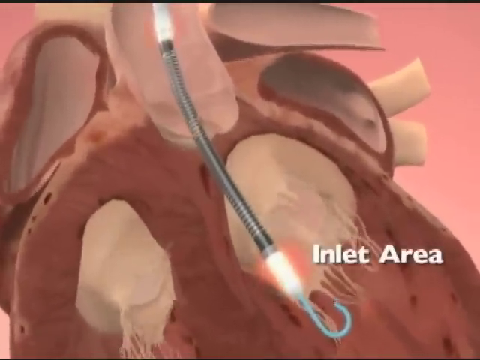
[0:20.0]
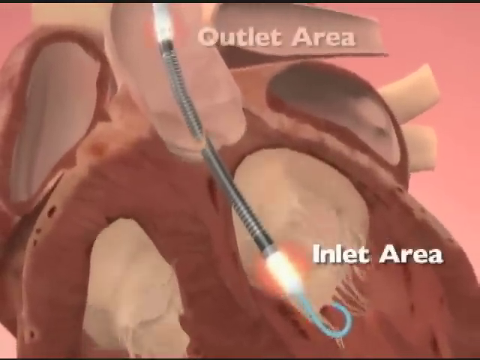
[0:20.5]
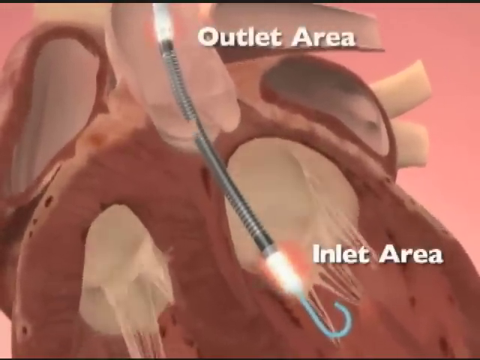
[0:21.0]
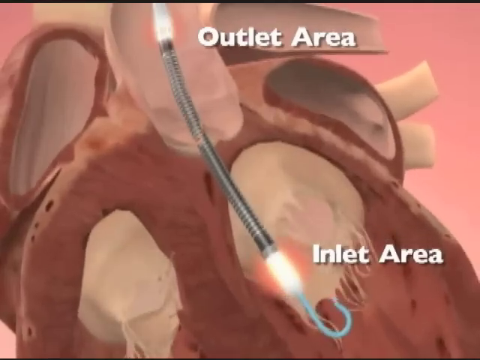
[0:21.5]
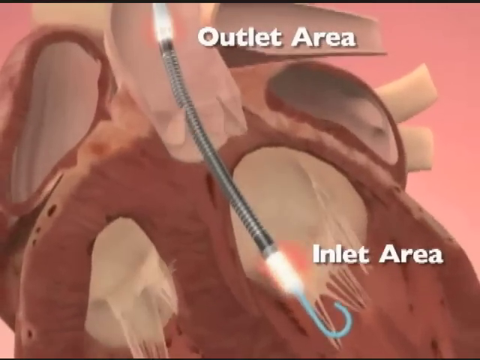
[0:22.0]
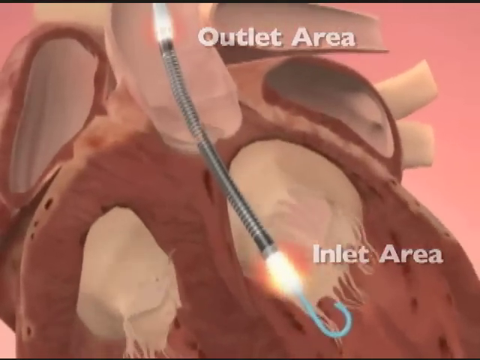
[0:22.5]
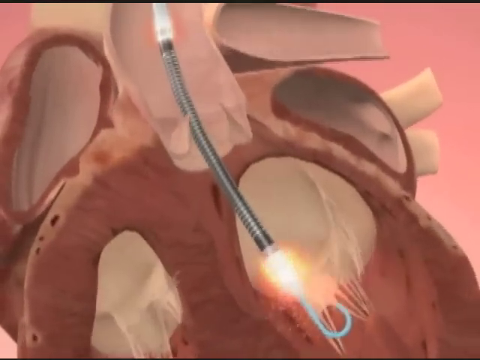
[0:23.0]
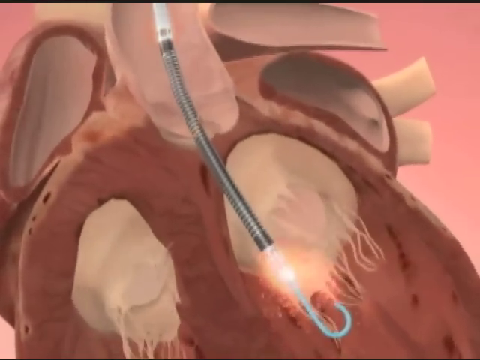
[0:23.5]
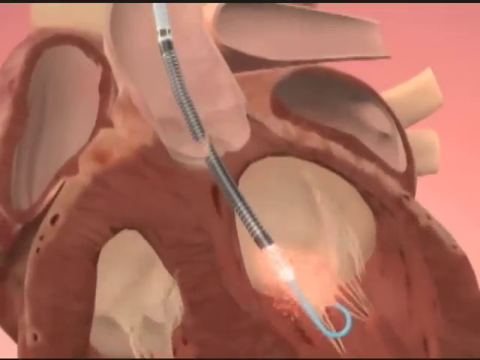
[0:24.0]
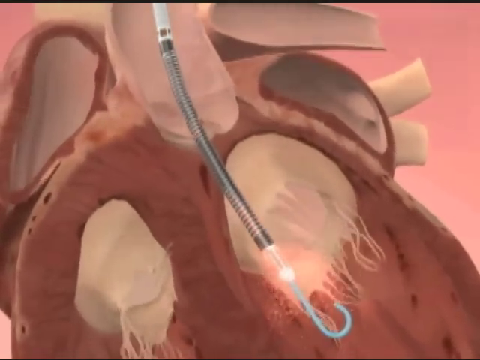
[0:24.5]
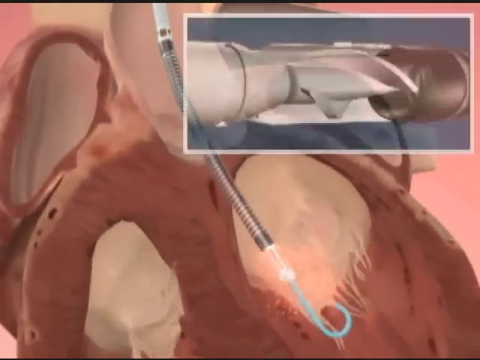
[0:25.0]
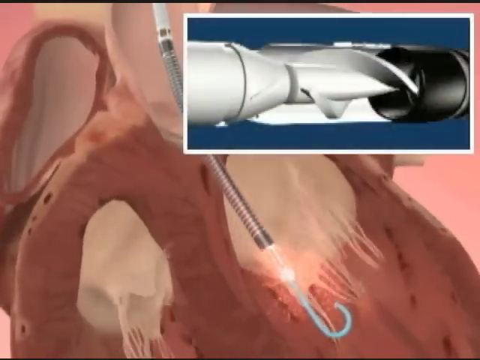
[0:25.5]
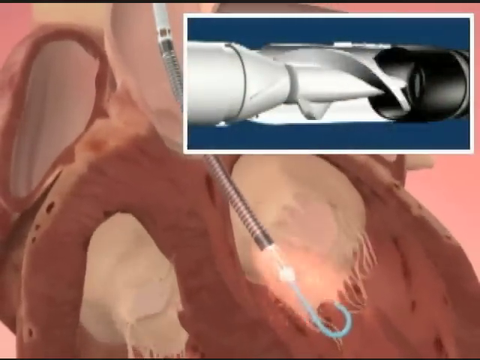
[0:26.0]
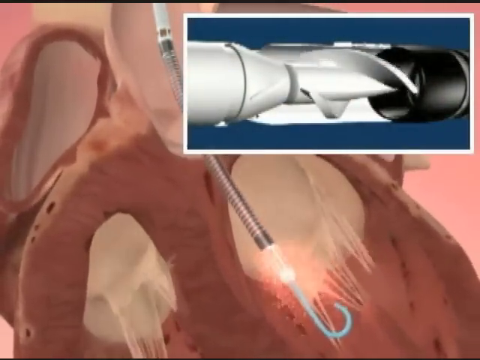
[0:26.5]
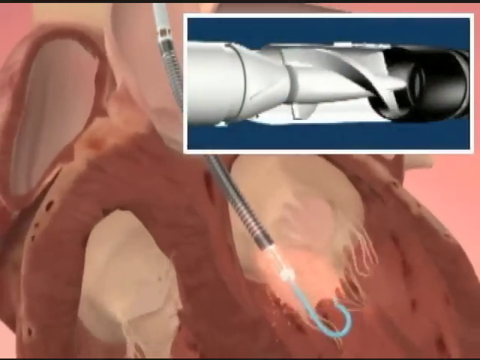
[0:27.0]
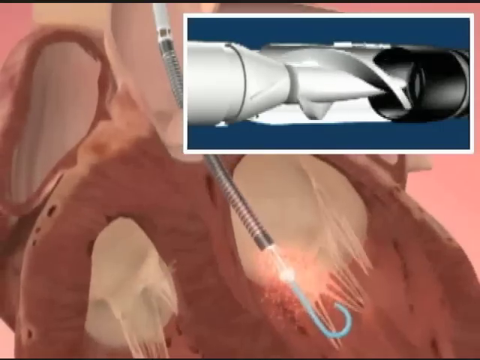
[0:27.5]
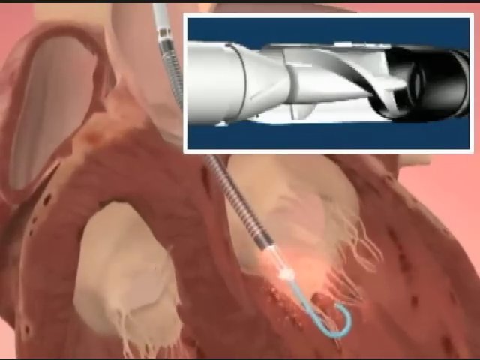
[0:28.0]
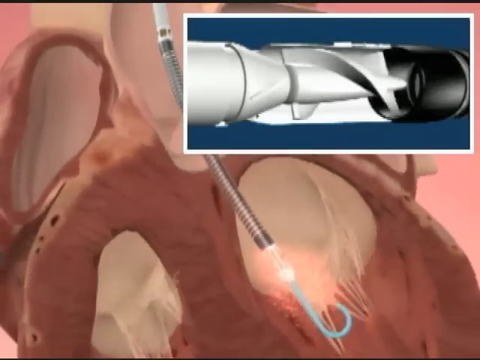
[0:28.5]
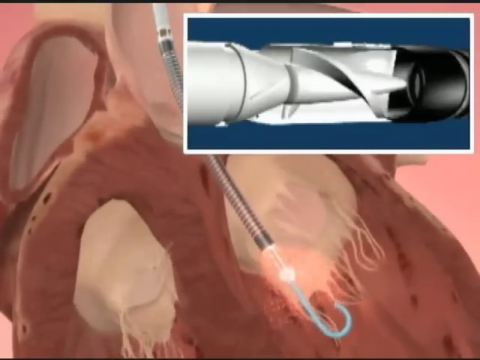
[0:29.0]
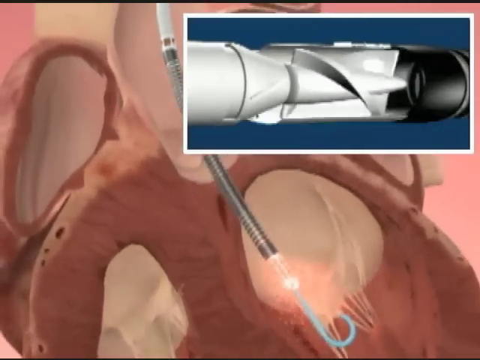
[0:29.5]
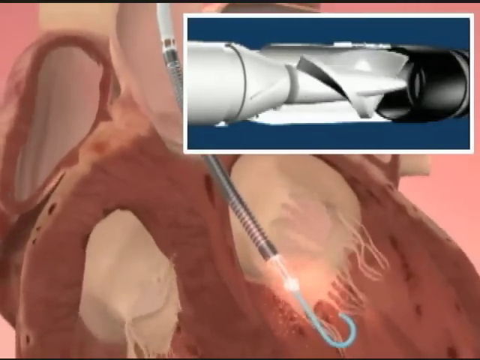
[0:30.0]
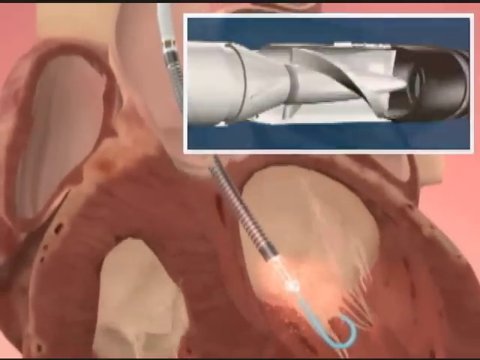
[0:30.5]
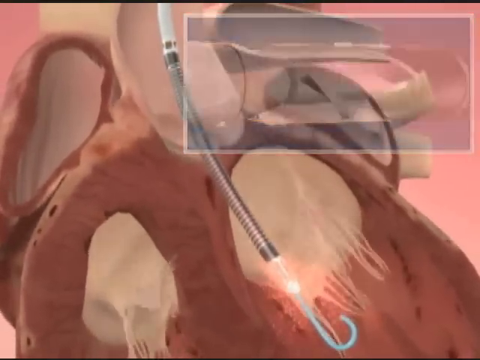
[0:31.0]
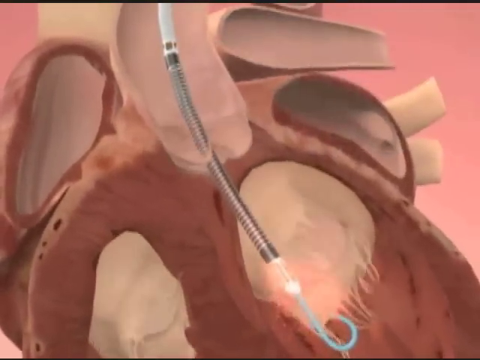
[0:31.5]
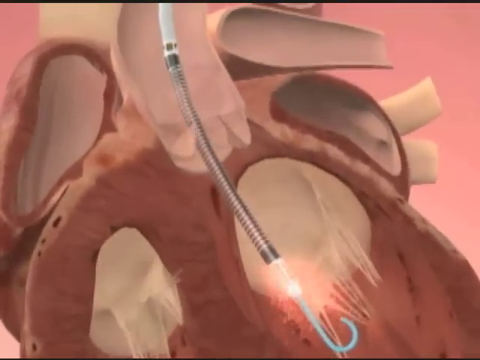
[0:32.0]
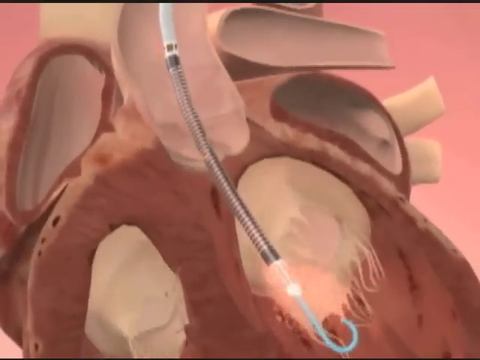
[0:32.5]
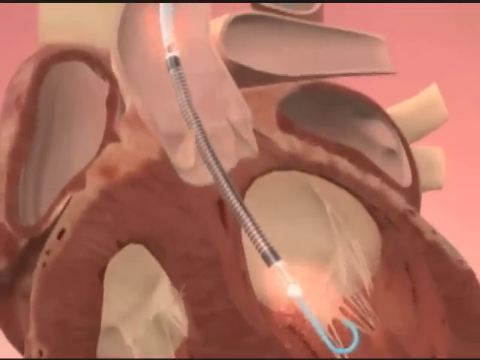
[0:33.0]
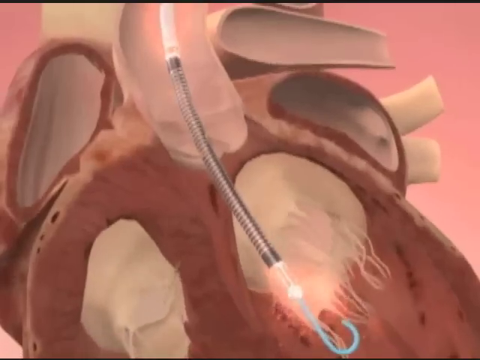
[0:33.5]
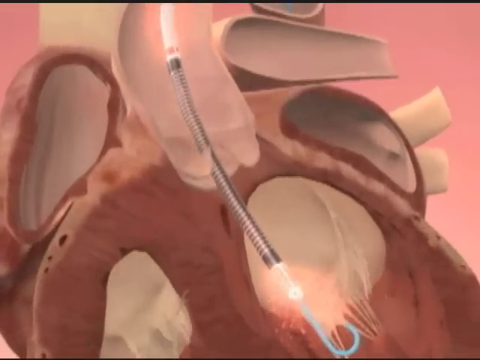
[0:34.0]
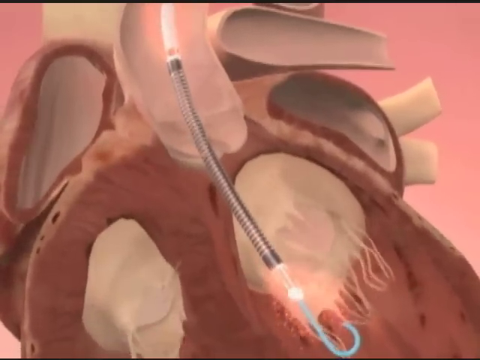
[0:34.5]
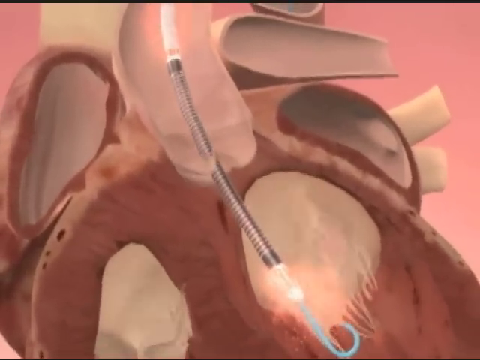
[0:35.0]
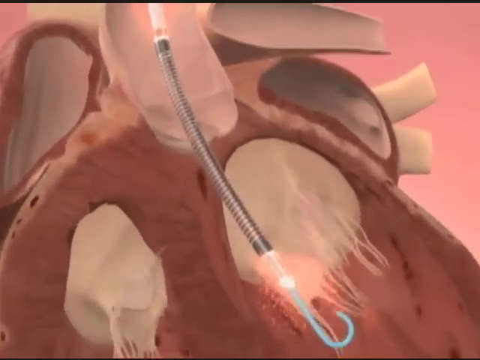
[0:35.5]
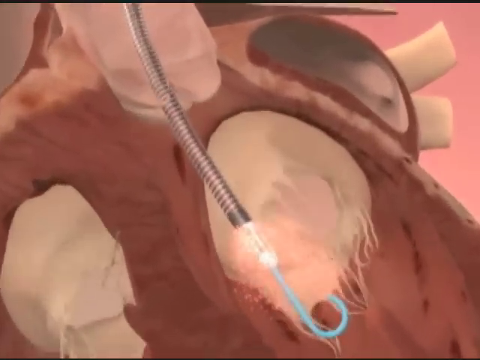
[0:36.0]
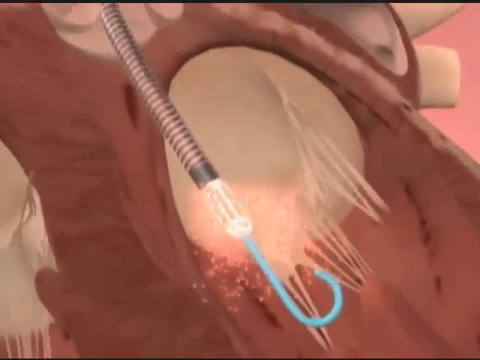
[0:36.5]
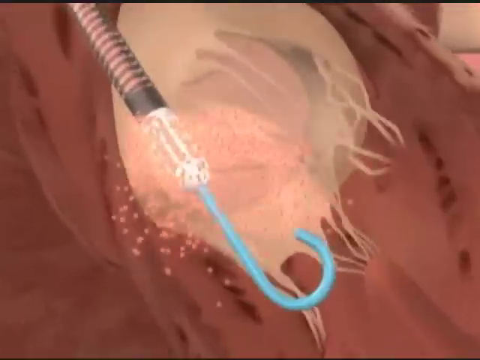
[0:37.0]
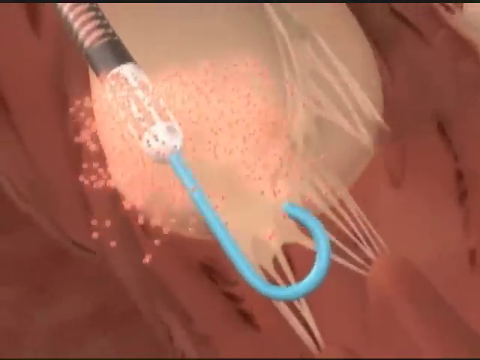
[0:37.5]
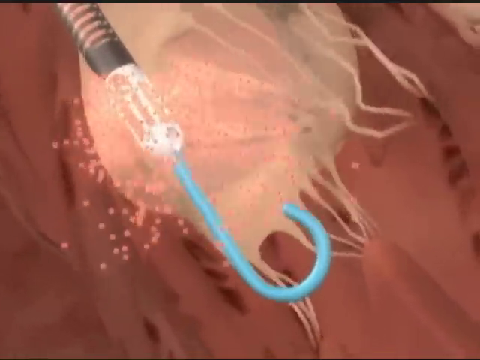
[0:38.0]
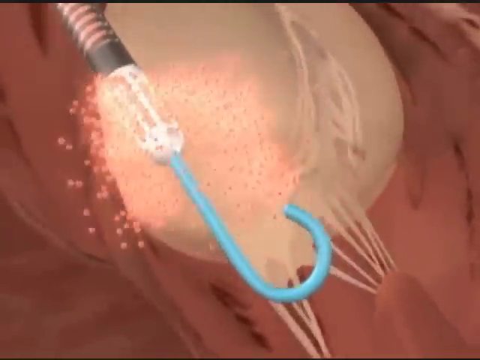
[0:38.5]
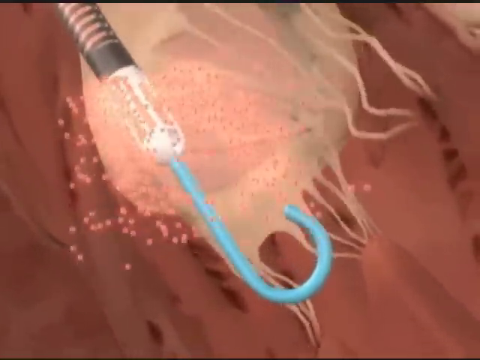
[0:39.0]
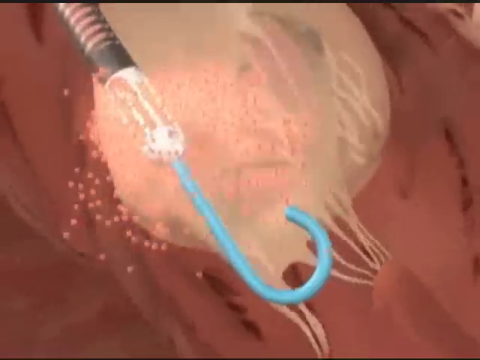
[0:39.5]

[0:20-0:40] The area between the hook and the black liquid filling is called the inlet area, and it glows a sort of bright white-orange. The heart sort of pumps up and down beside the device, and then a glowing area at the back, where the black part of the tube ends, comes into view; the rest of the tube is called the outlet area. Another display follows, showing a small drill in a horizontal position spinning to the right, probably clockwise from this view. The heart continues to pump, the black part of the tube starts to become less dense, and the spaces between the black lines turn a sort of light red as the black liquid or substance is pumped through the heart. The view zooms in: material absorbed from the heart mixes with the black liquid, making it an orange color. The hook area and the inlet area are sort of sucking in particles from the heart chamber, which look like little orange dots.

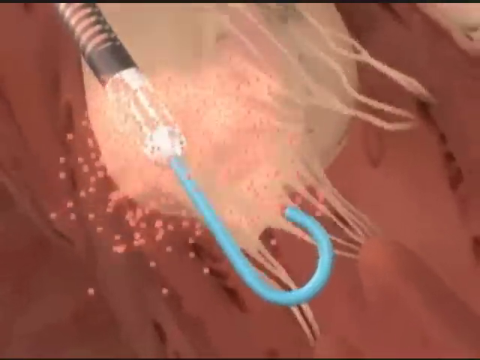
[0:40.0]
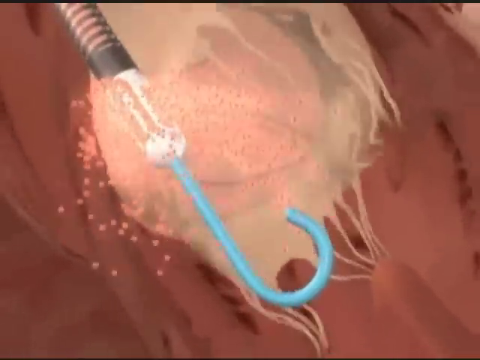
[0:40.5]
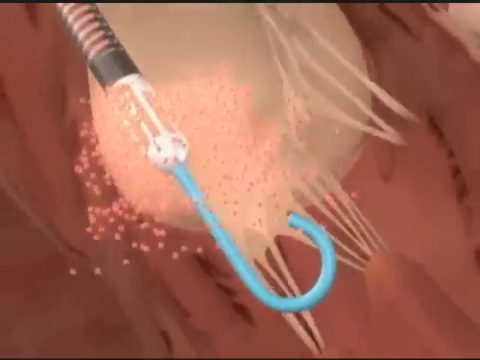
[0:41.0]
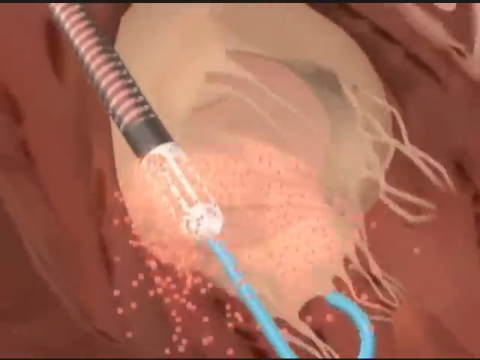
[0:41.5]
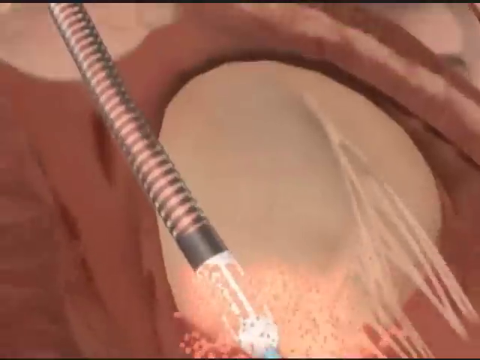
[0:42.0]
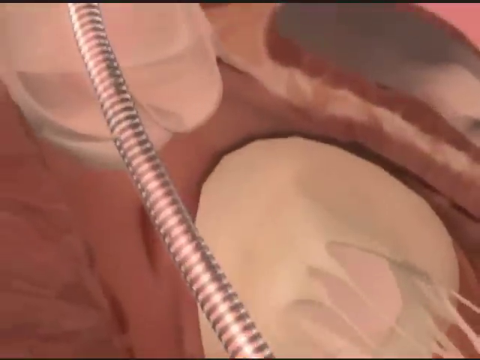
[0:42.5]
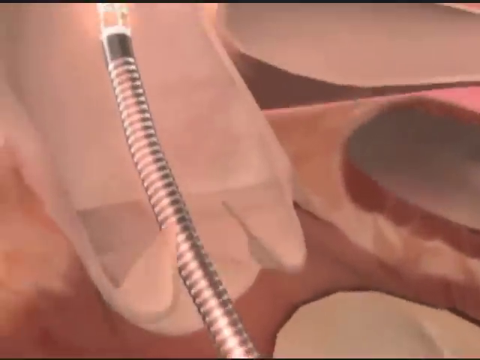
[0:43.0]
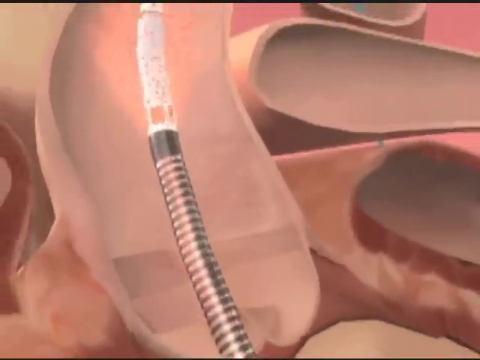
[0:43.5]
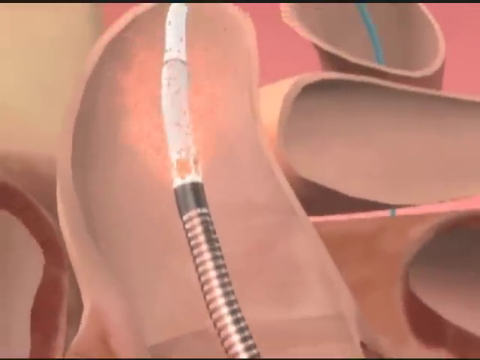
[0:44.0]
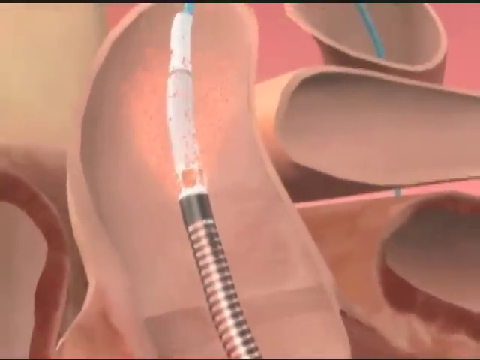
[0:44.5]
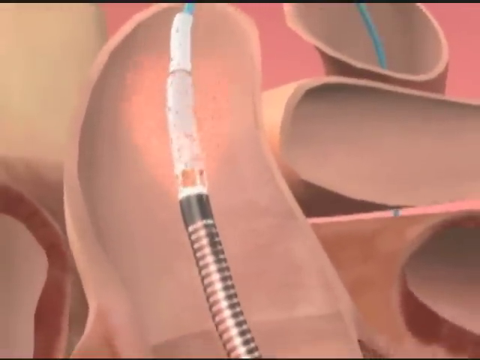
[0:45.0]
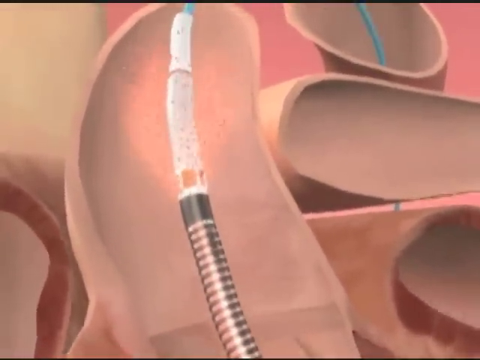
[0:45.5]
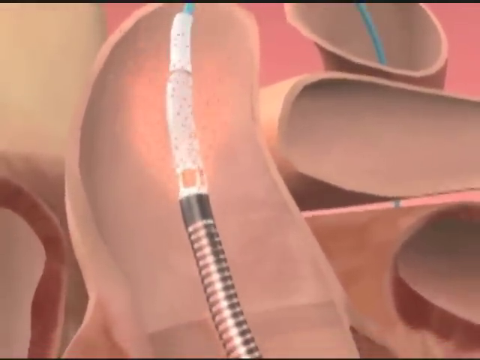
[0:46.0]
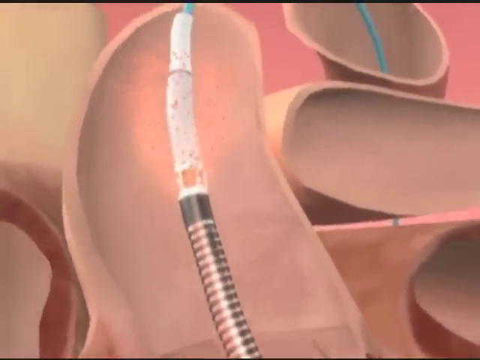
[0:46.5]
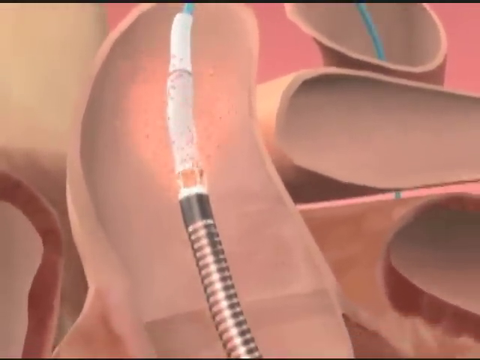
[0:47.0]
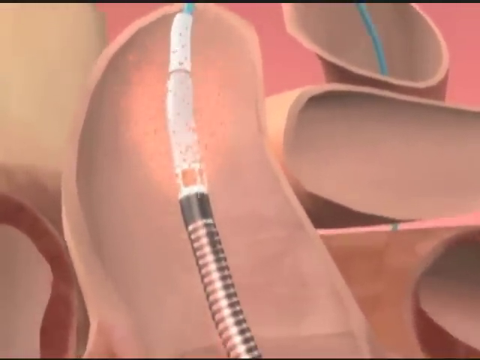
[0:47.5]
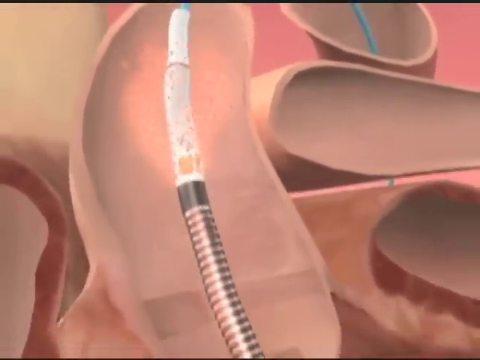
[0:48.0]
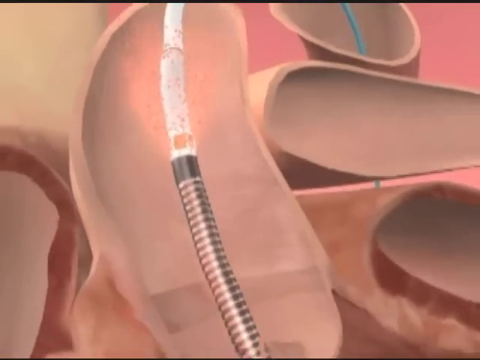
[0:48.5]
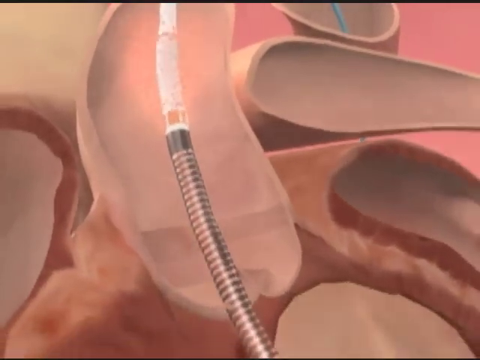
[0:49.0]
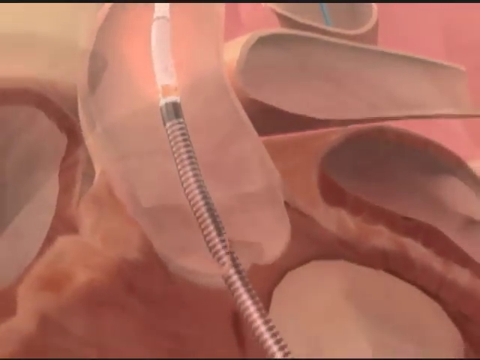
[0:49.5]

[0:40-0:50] The view zooms up the tube to the outlet area, which is sort of pumping the orange dots and fluid through to the back of the tube and out of the heart area. After the outlet area, the fluid starts to look like it is foaming. Further back, either the covering or maybe a reaction with the blood makes the back end of the tube look opaque white. Beyond that, the tube is light blue, and nothing is really seen going through it.